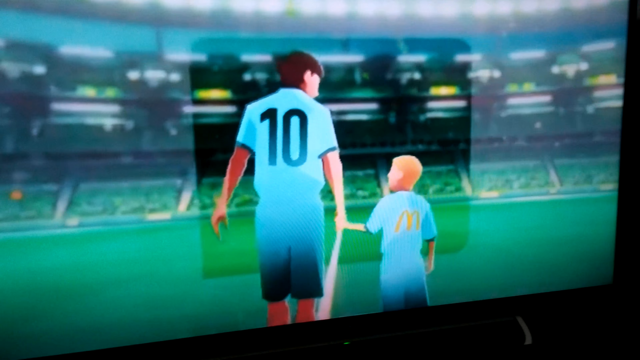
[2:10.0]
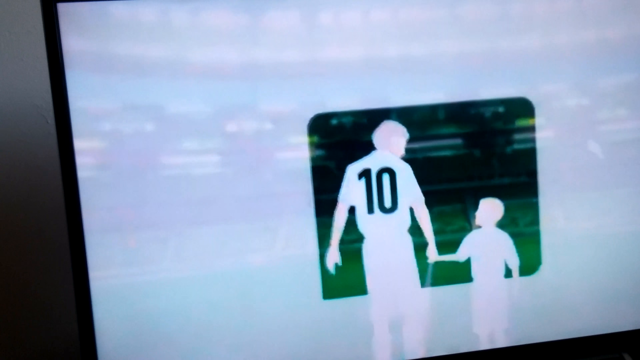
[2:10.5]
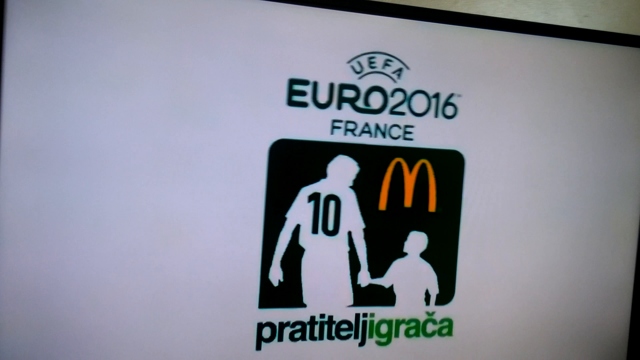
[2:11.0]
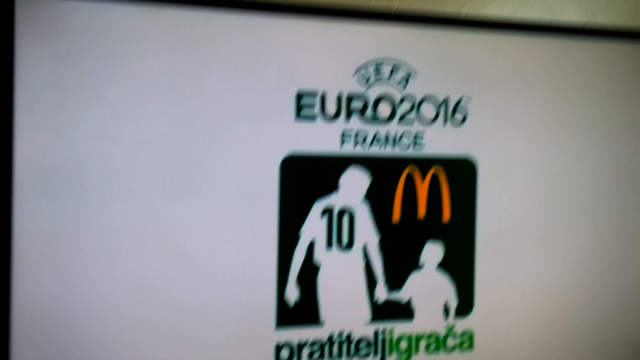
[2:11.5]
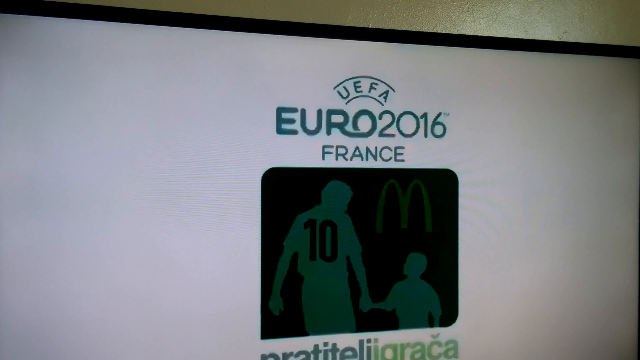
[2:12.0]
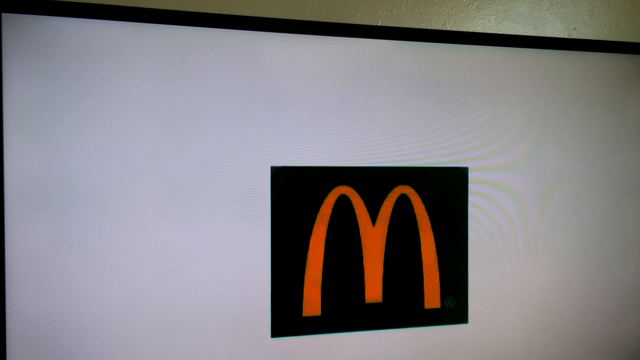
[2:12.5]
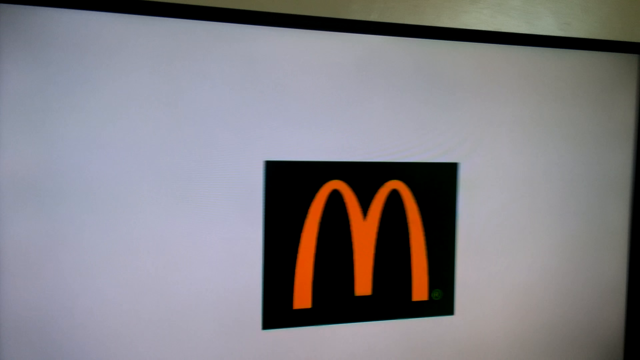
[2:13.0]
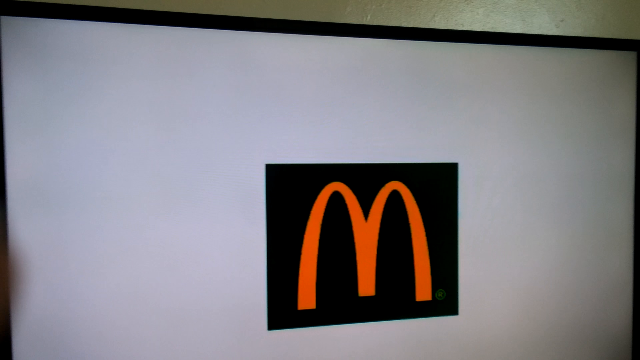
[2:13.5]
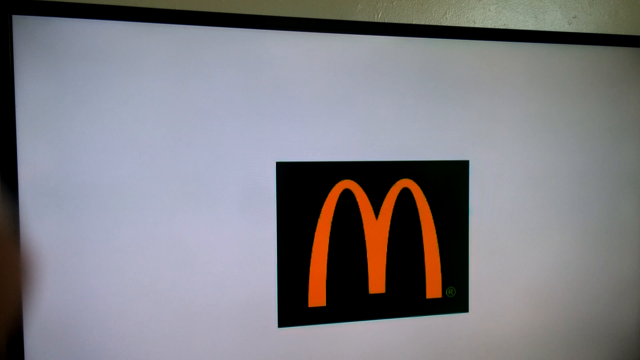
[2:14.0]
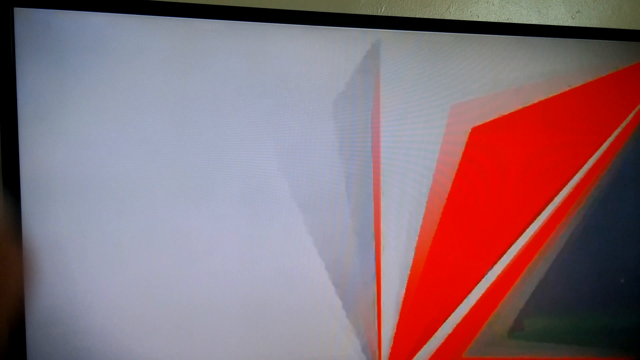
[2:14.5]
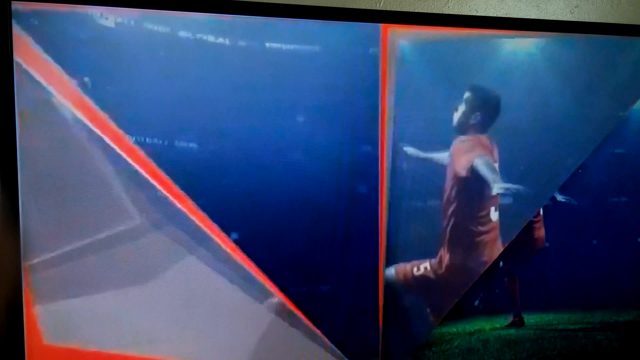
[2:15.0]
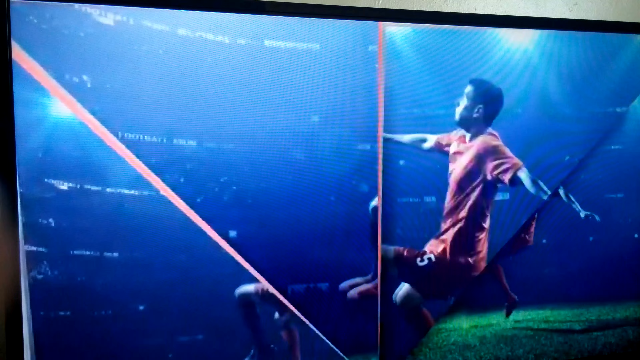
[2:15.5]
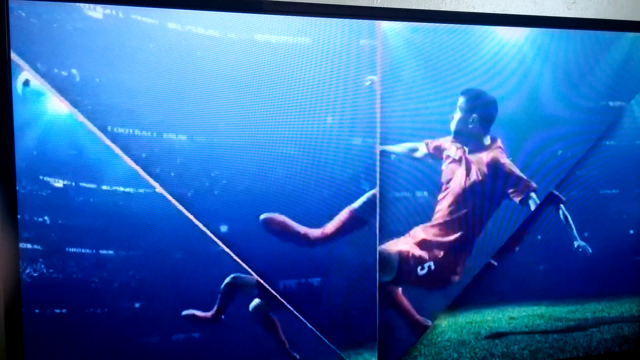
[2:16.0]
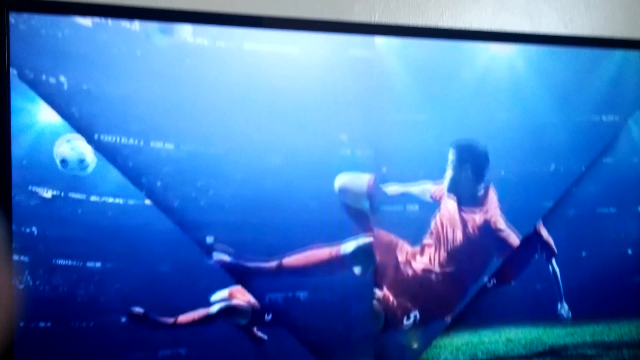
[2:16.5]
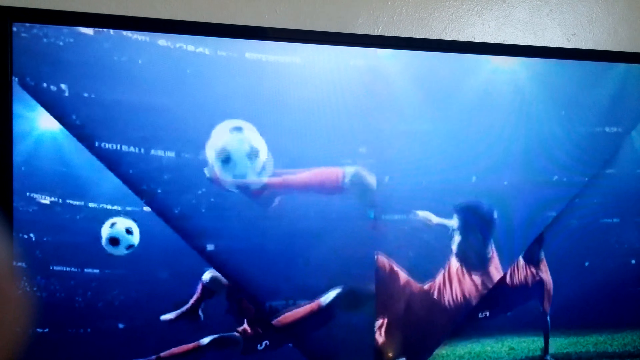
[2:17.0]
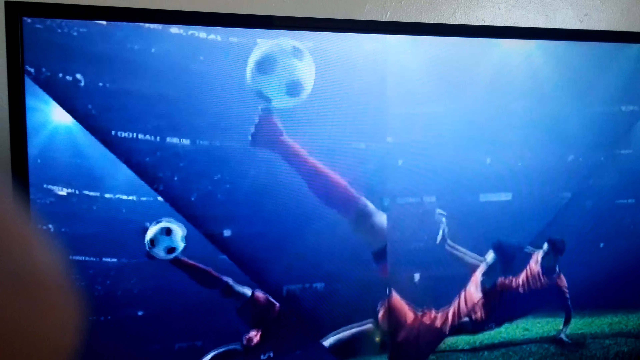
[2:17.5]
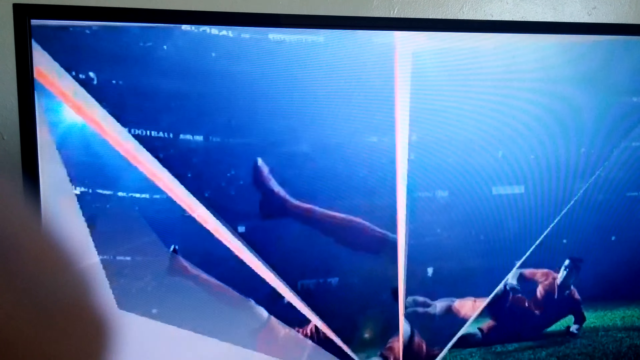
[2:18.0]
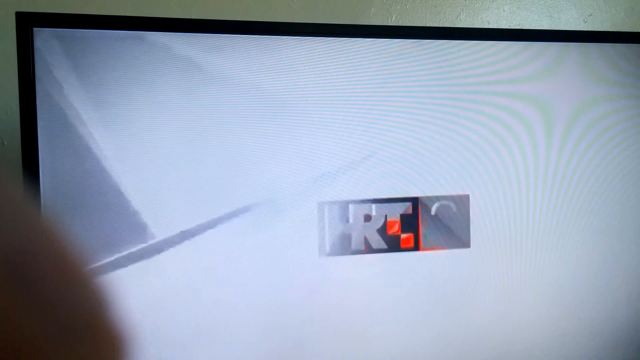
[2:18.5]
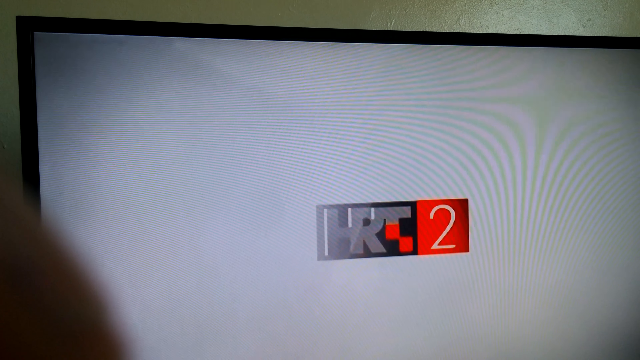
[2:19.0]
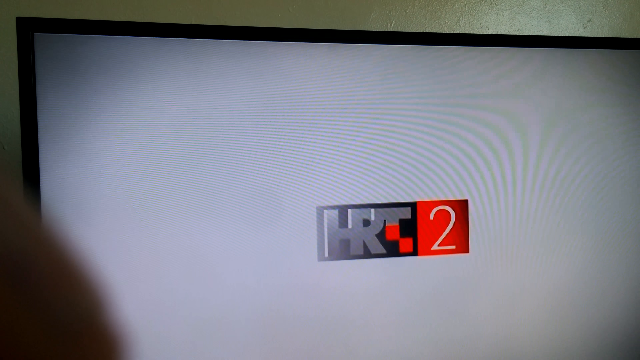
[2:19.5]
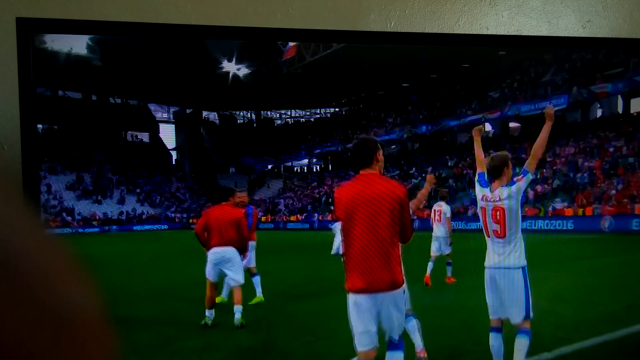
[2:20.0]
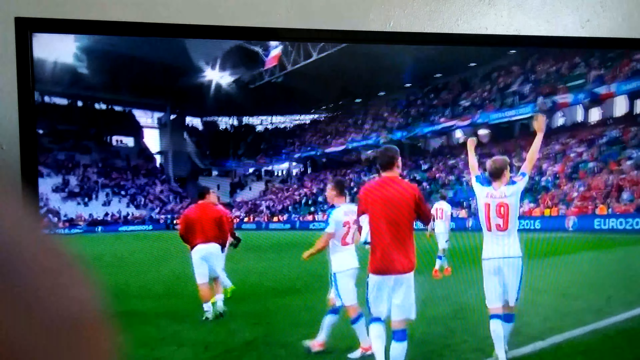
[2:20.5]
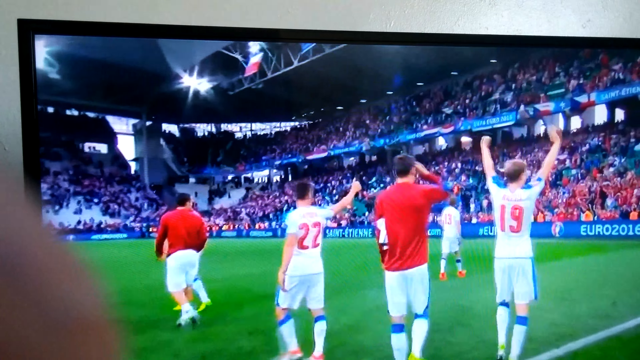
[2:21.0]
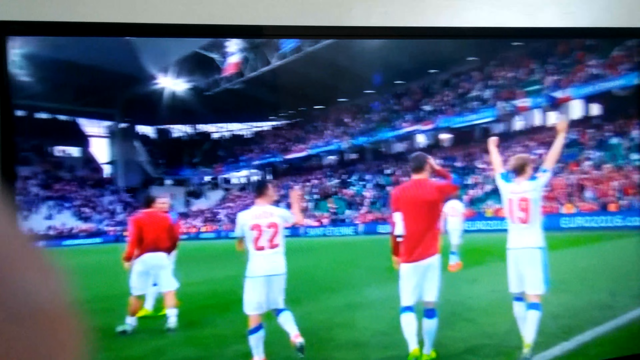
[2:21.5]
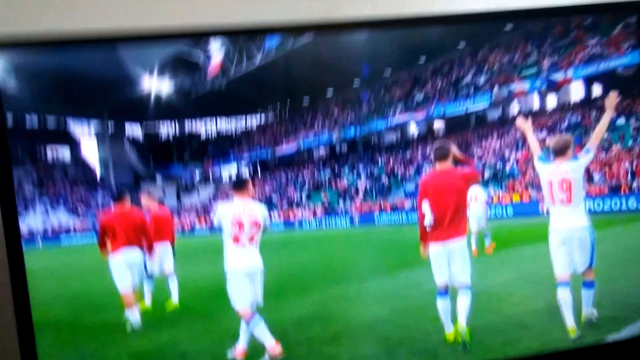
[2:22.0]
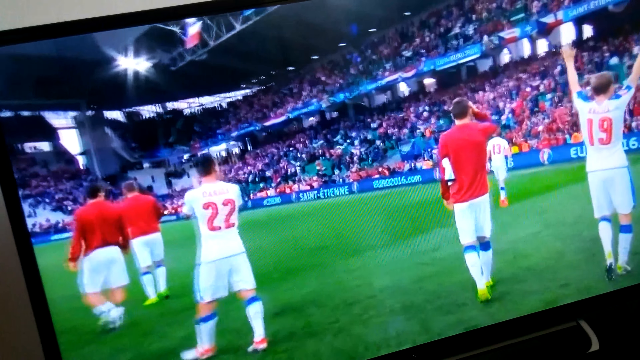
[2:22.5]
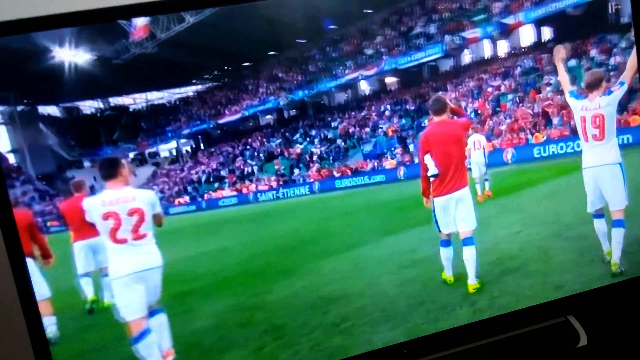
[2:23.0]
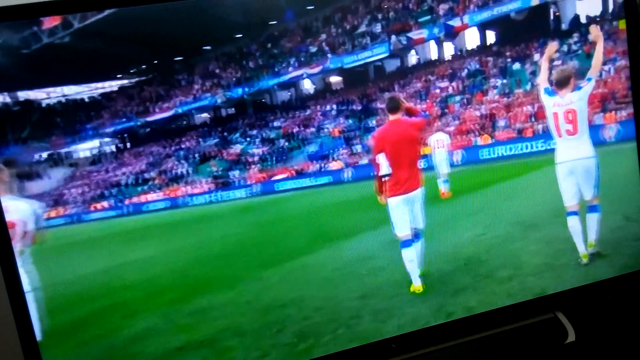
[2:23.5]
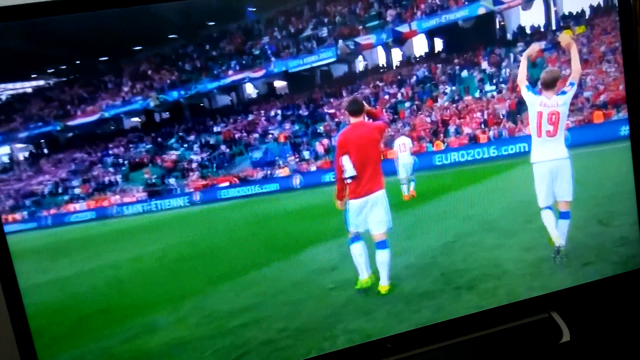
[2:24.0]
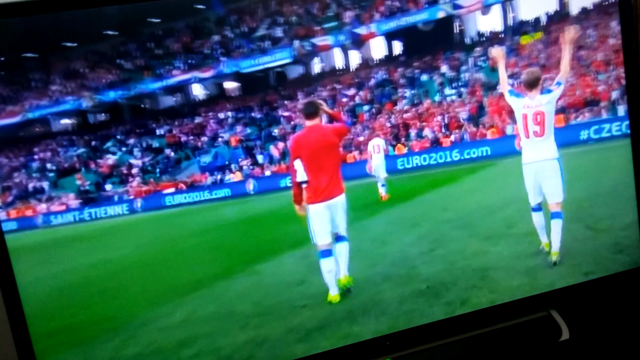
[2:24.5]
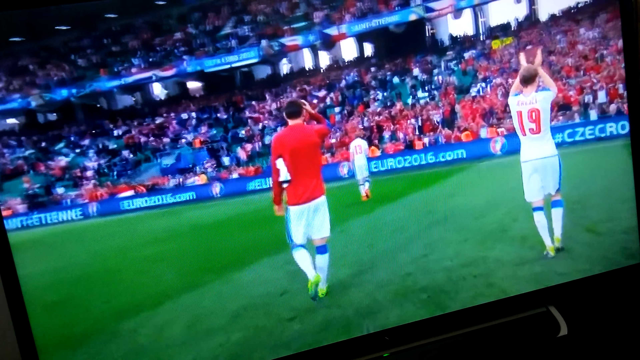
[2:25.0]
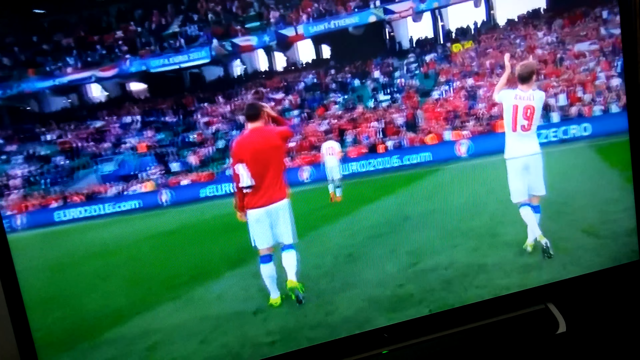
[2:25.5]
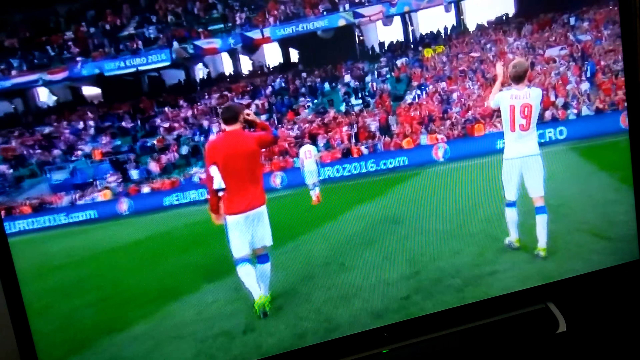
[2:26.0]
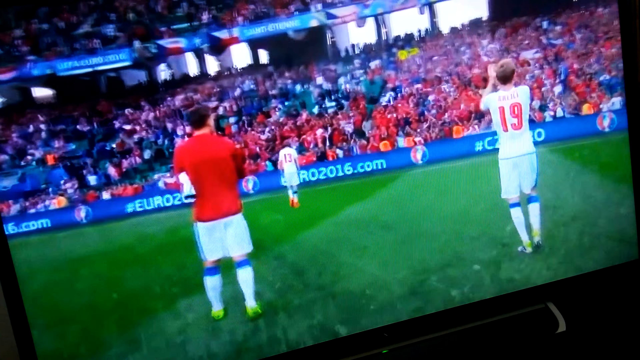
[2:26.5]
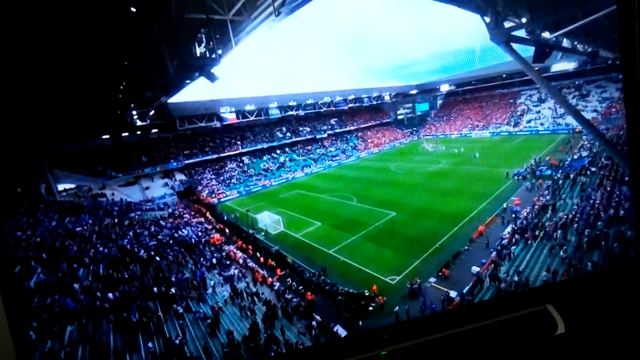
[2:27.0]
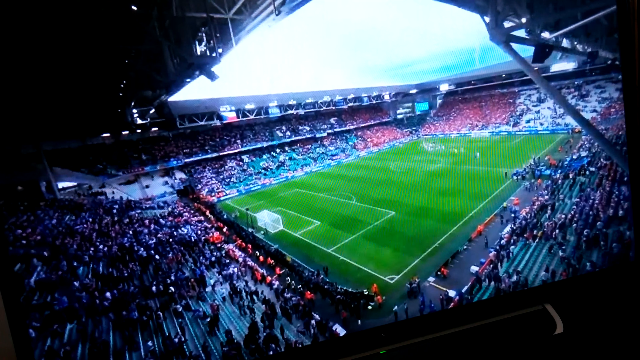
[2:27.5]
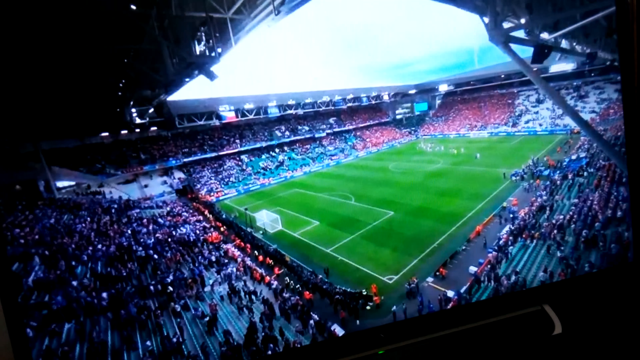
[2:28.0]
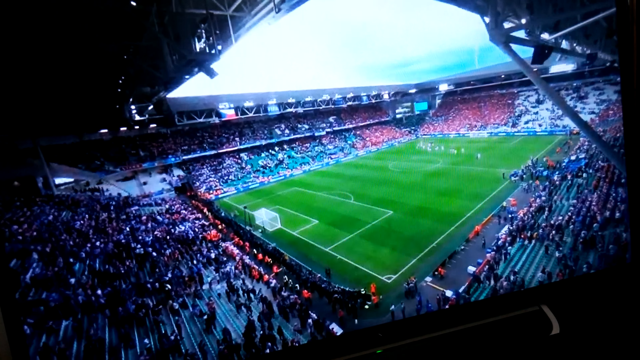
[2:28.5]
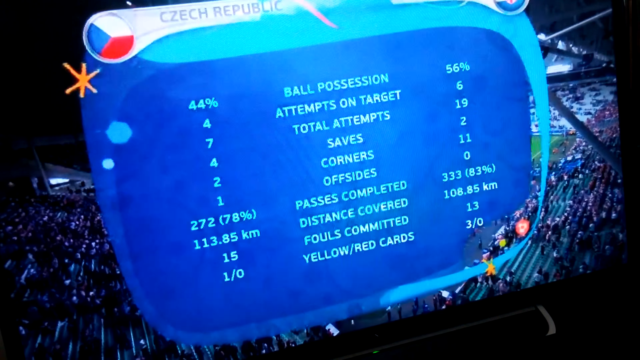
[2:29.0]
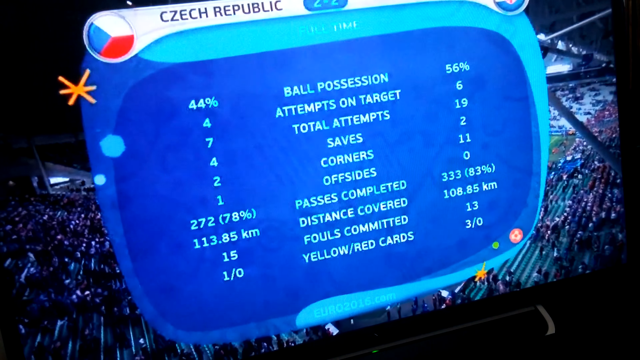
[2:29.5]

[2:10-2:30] What appears to be a McDonald's commercial is shown as someone uses their camera to film a television screen. The television shows a McDonald's logo, the M arches. The scene shifts to a man in a soccer stadium jumping into the air and doing a bicycle kick on a soccer ball. The screen is broken into different parts like a broken mirror, each panel showing the man kicking the ball, and the ball flies towards the TV screen. The TV screen turns white, and a logo reads "HRT2". A soccer field then appears with a group of players on it; some wear red shirts and some wear their soccer uniforms. Number 22 waves at the crowd, number 19 has both arms up, and number 13 walks towards the crowd. The audience is kind of cheering. The image kind of freezes briefly, then number 19 starts to clap. The camera zooms out to show the entire soccer field. A computer-graphic monitor appears on the screen showing statistics on the current game. At the very top it reads "Czech Republic" with a Czech Republic flag, and there are categories such as ball possession, attempts on target, total attempts, saves, corners, offsides, passes completed, distance covered, fouls committed and yellow.